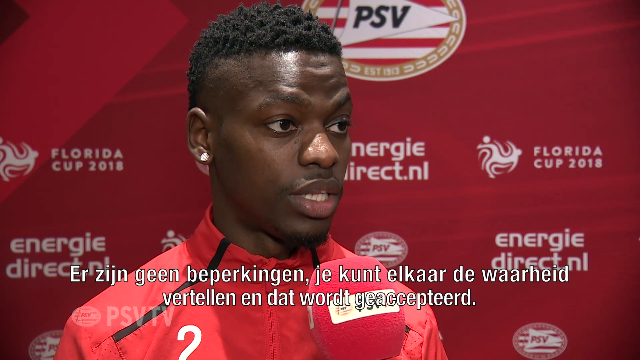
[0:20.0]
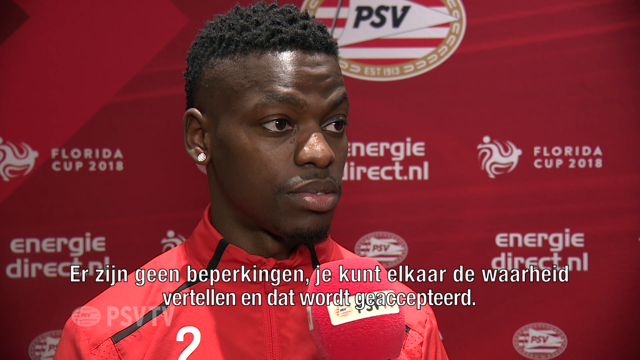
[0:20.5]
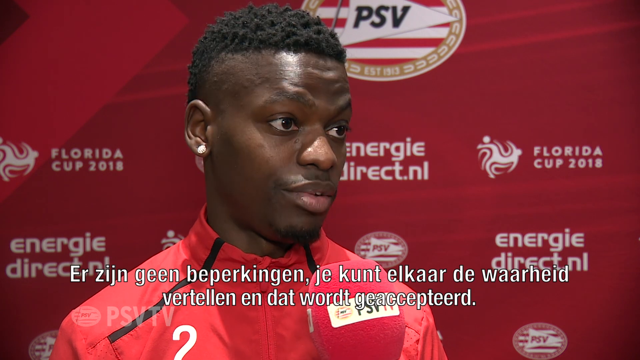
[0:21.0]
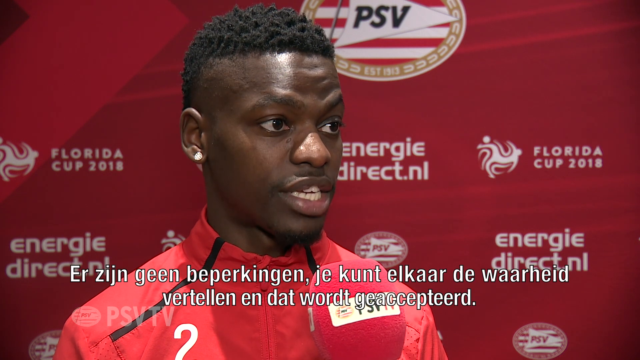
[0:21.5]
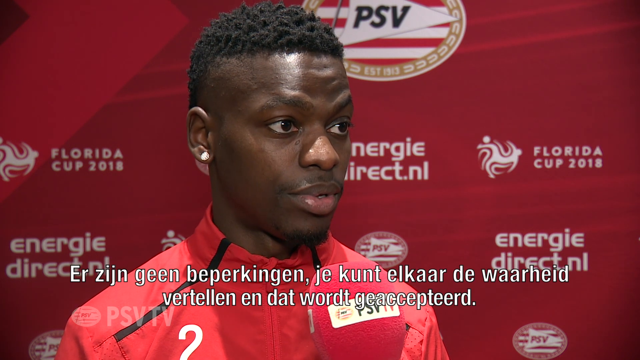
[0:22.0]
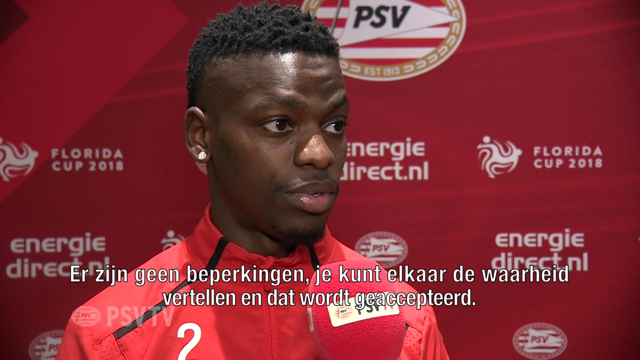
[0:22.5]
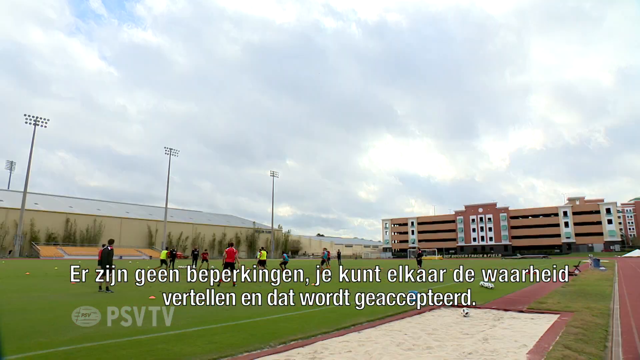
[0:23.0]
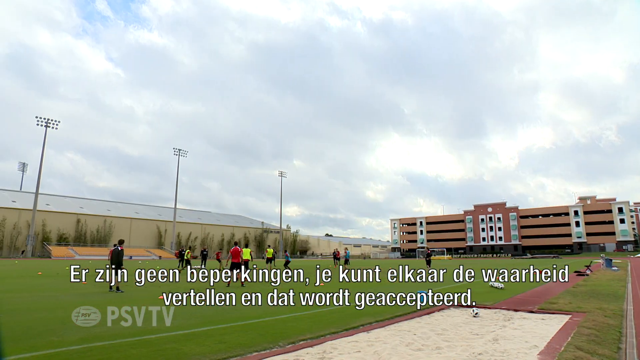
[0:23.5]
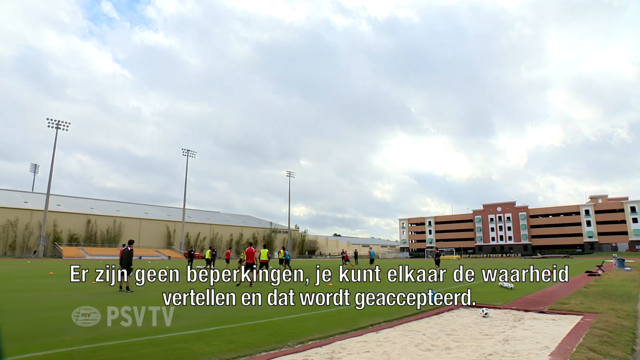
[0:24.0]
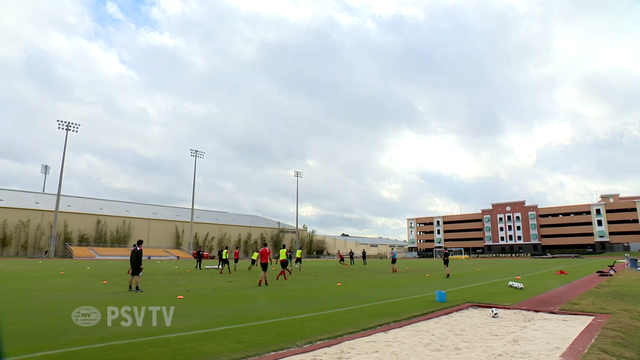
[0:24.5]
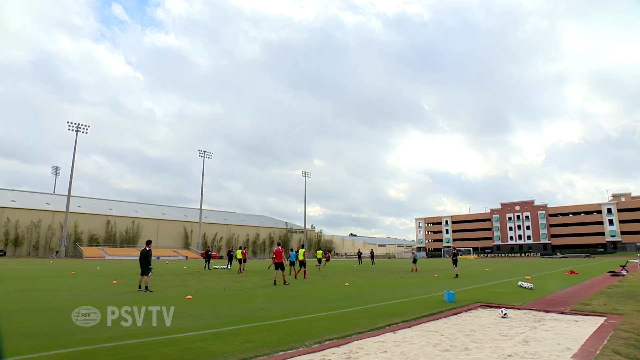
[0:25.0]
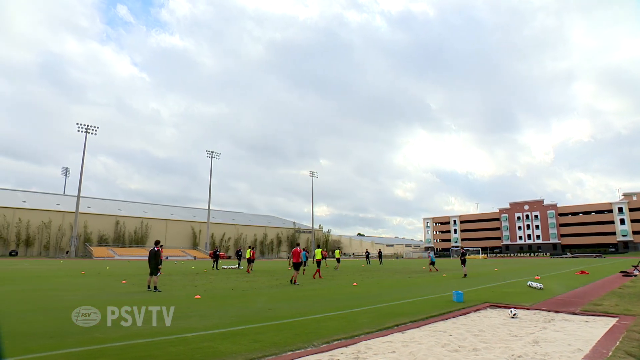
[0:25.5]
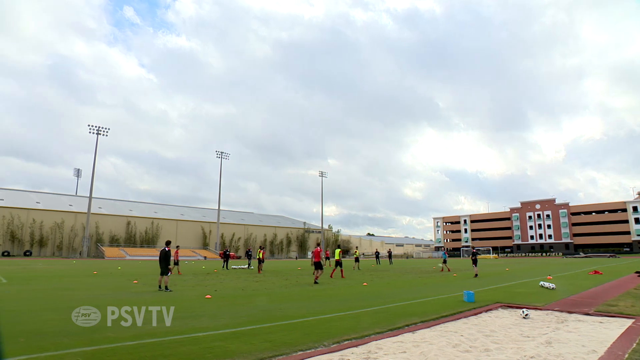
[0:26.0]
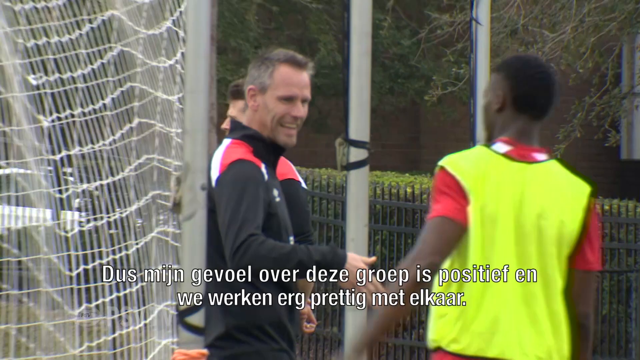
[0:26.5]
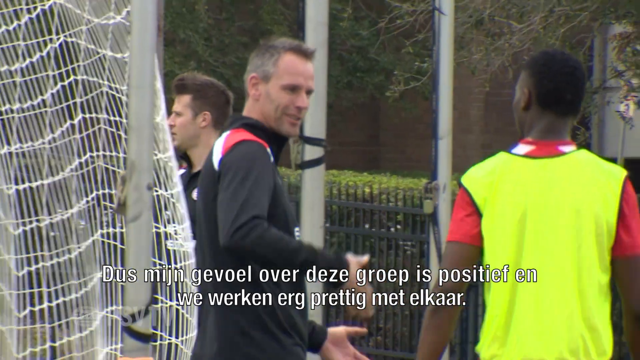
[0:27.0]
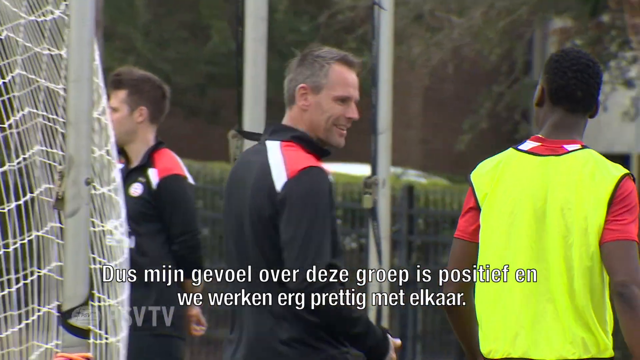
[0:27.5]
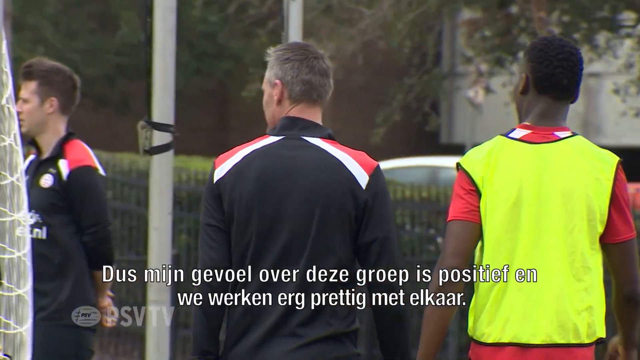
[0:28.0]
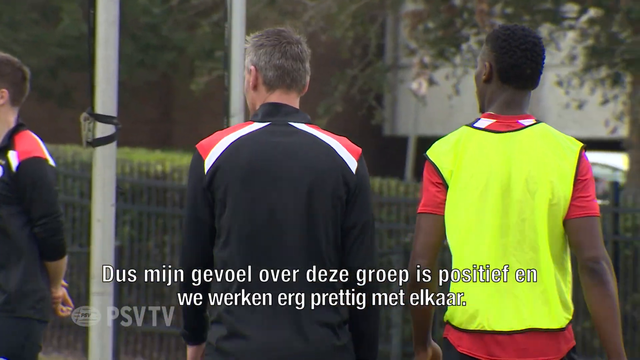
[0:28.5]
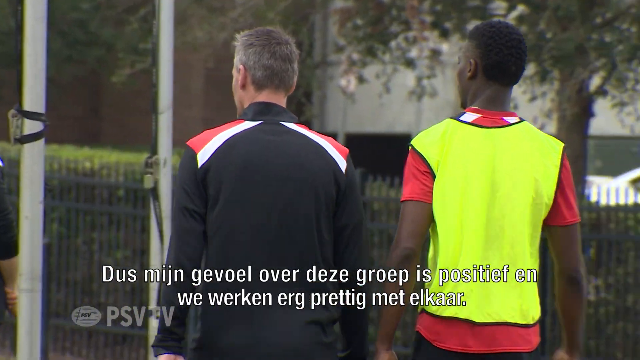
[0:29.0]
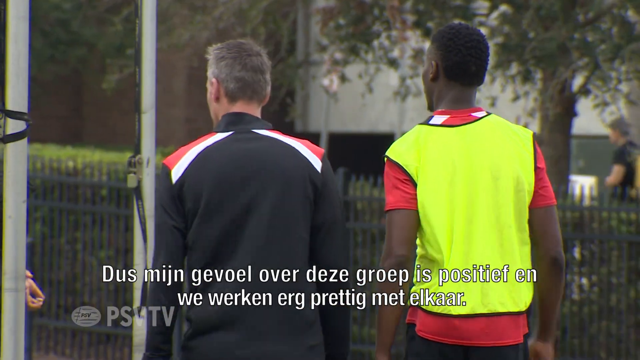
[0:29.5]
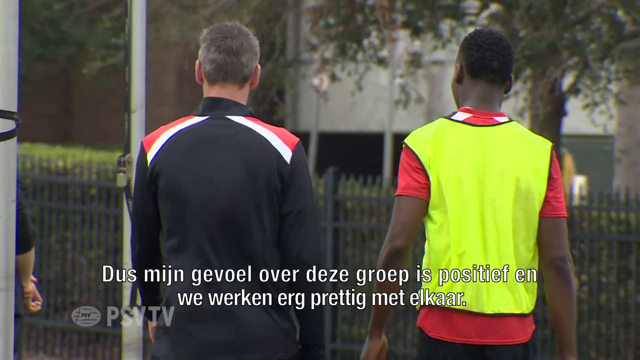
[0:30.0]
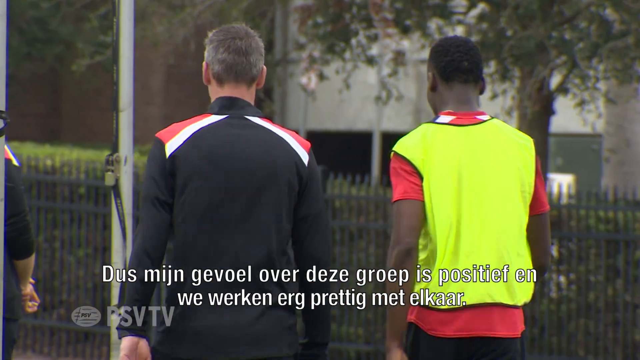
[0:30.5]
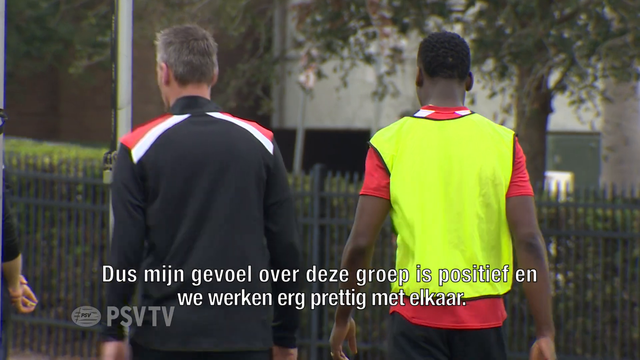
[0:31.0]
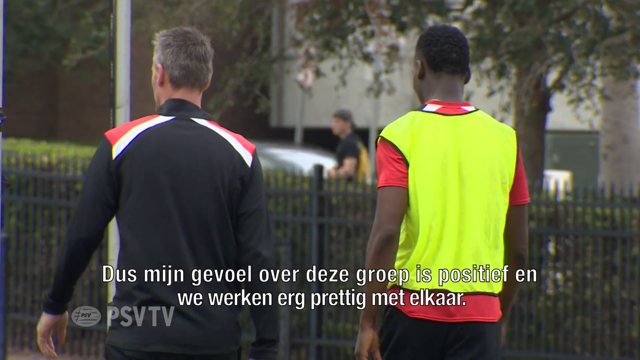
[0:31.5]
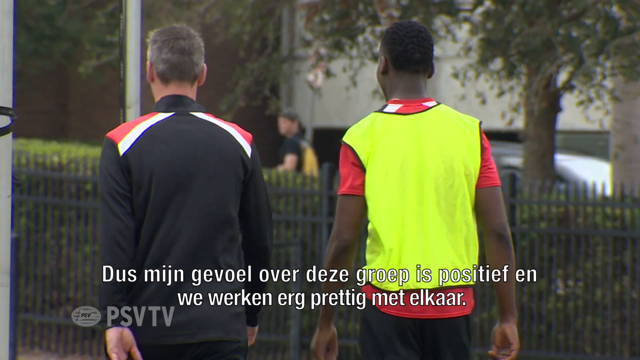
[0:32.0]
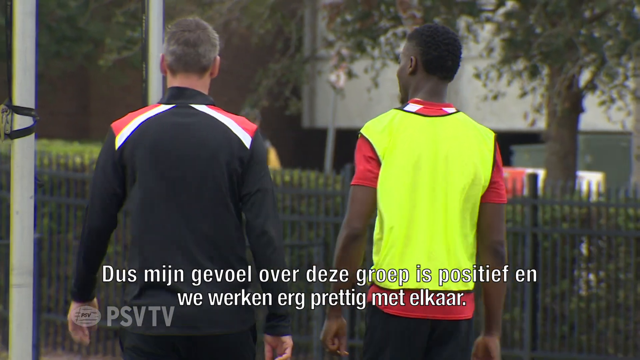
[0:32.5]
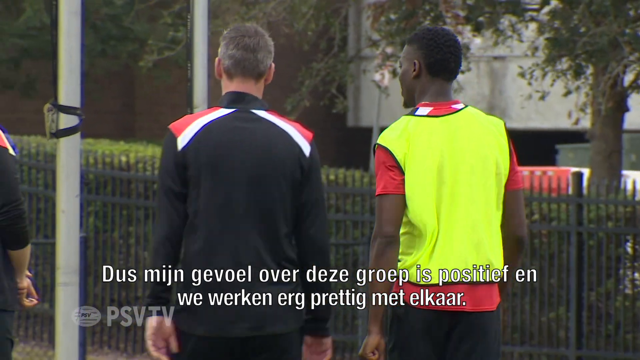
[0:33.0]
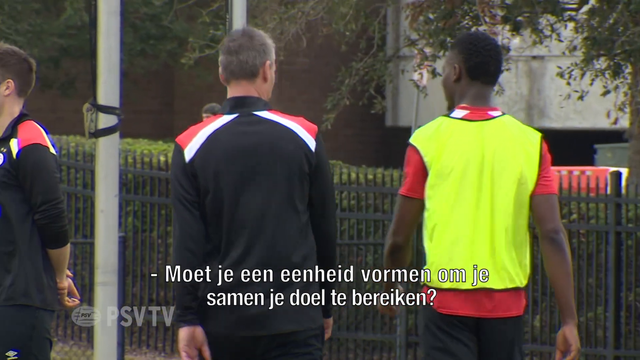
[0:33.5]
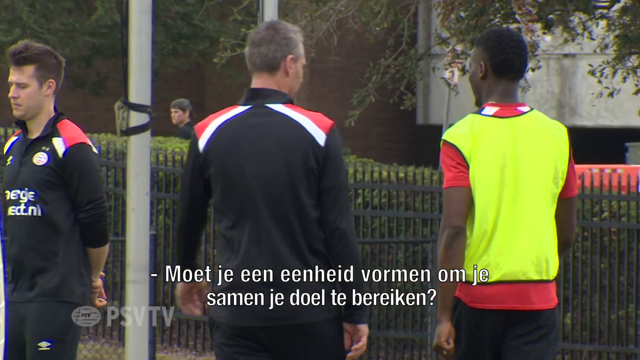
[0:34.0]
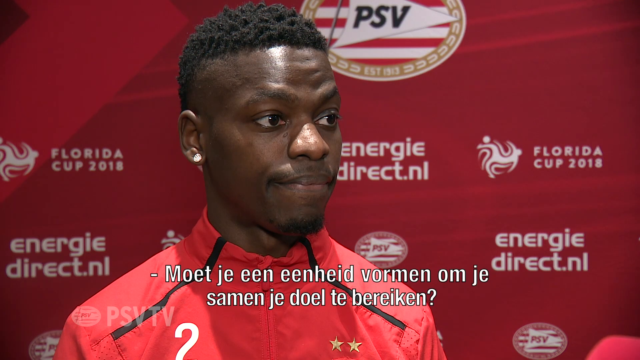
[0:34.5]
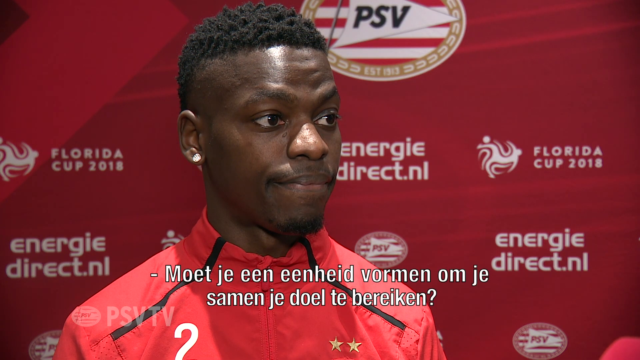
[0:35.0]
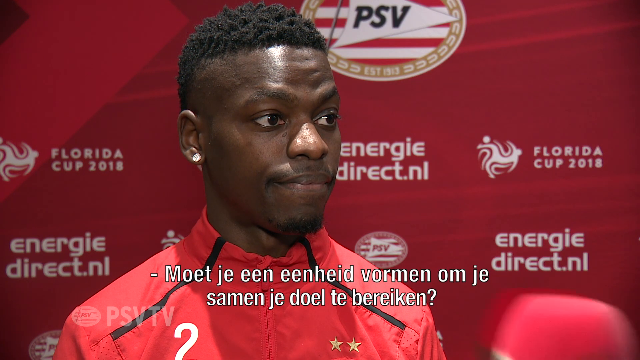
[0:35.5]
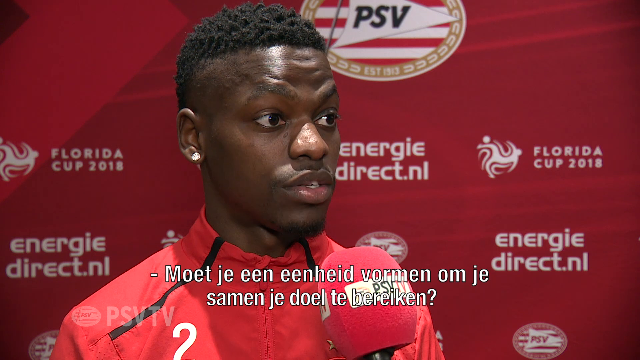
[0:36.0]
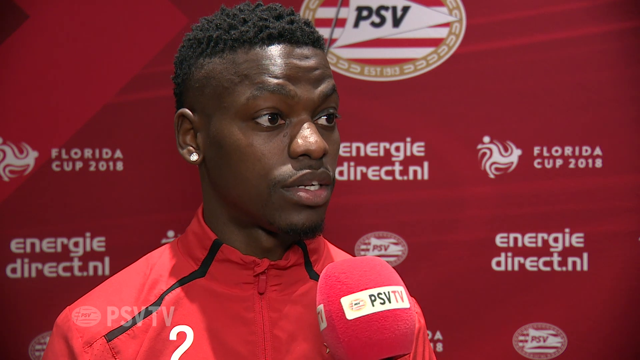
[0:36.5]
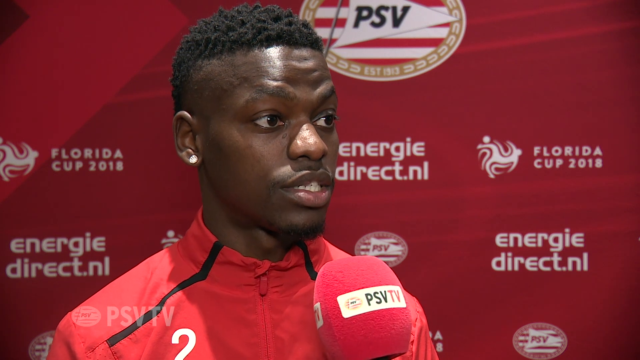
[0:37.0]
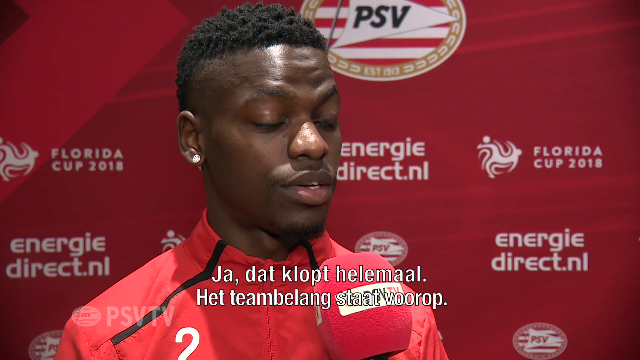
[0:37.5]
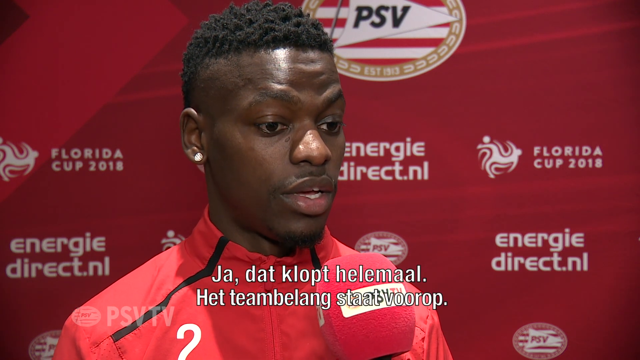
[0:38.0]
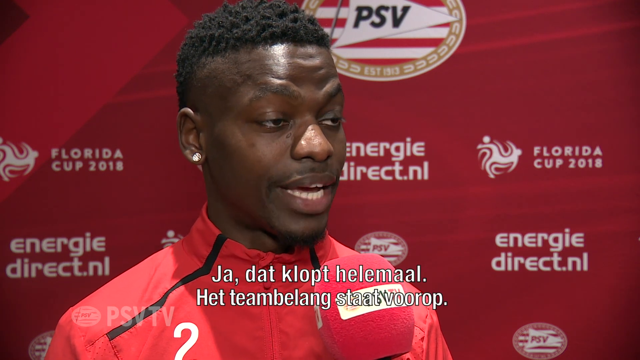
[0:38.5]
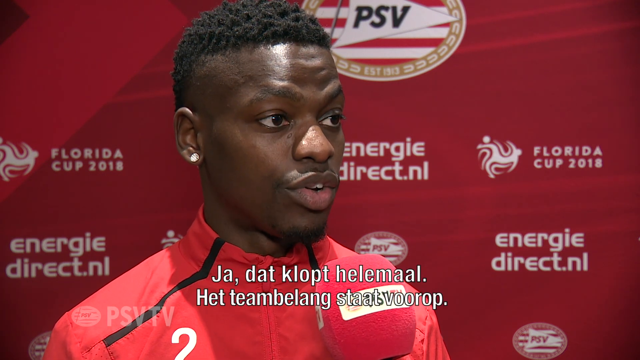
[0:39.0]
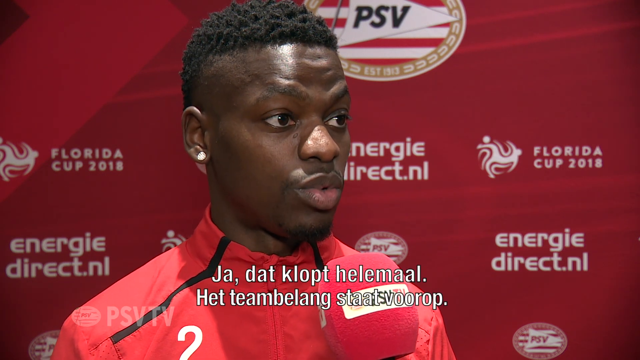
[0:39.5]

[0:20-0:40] An African-American man with diamond earrings in his pierced ears is interviewed in front of a big red sign bearing sponsors' names. He is then seen walking by his coach, wearing a yellow jersey over his shirt that makes him stand out. They are on a big field that looks like a soccer field, with a big net like a soccer goal at one end and green hedges and bushes in the background. As the man talks, apparently in a non-English language, captions in white letters appear at the bottom of the screen and change page by page as he speaks.